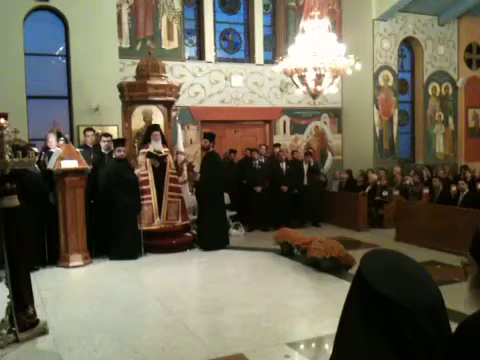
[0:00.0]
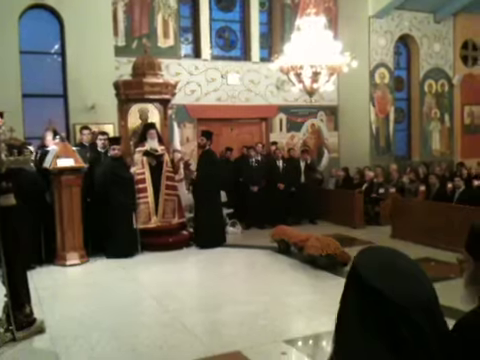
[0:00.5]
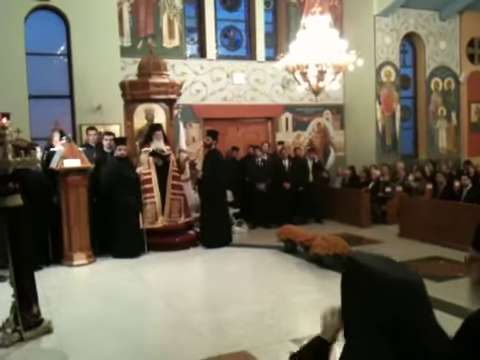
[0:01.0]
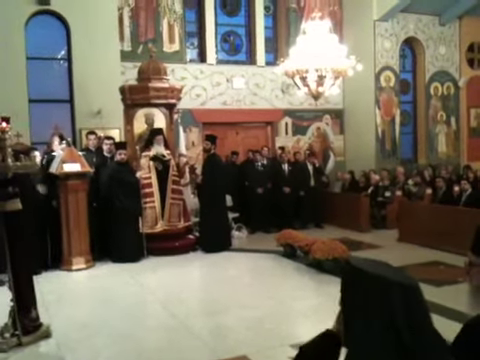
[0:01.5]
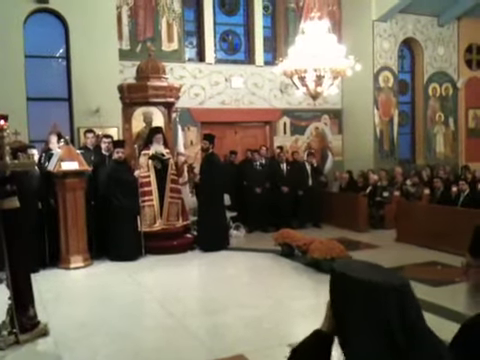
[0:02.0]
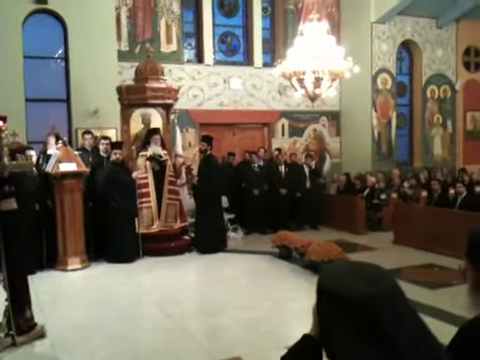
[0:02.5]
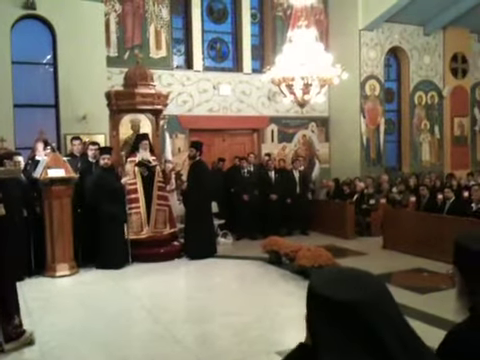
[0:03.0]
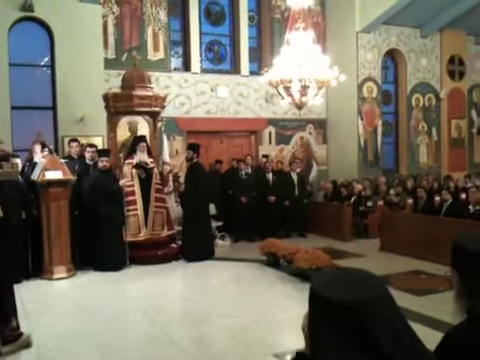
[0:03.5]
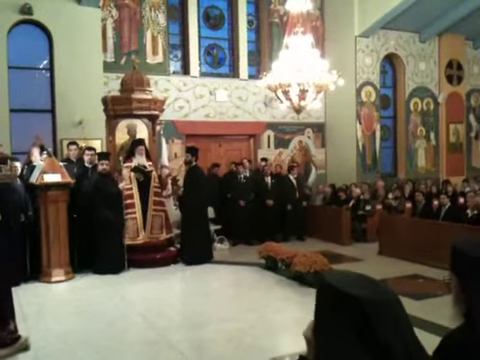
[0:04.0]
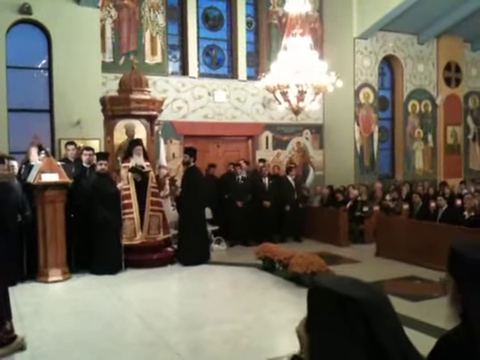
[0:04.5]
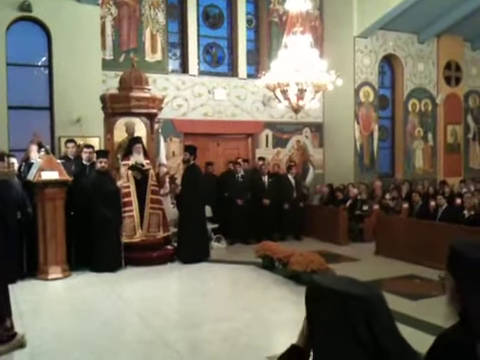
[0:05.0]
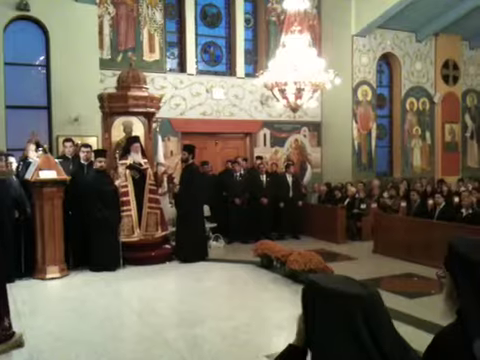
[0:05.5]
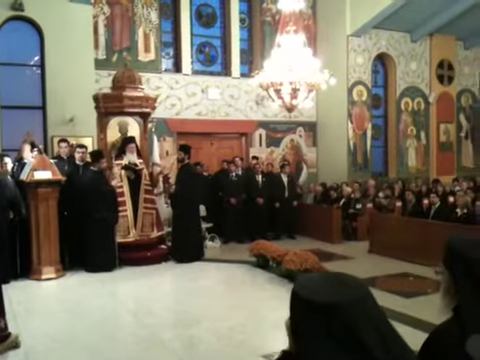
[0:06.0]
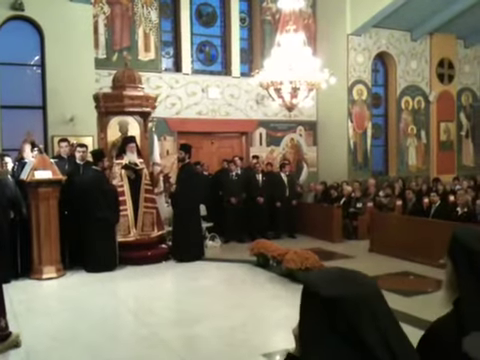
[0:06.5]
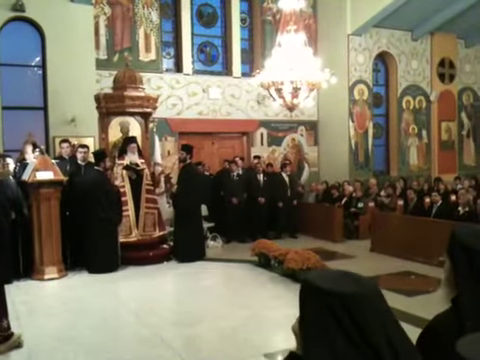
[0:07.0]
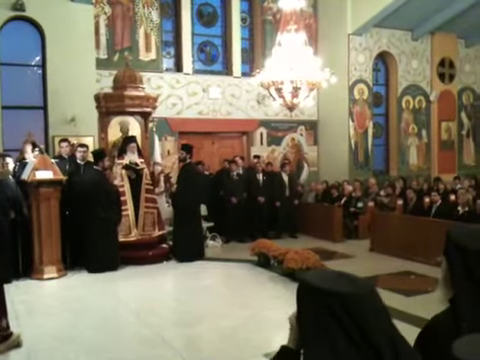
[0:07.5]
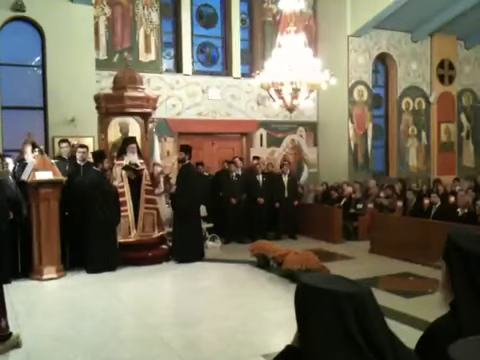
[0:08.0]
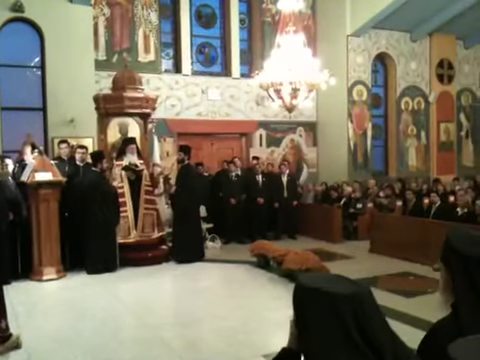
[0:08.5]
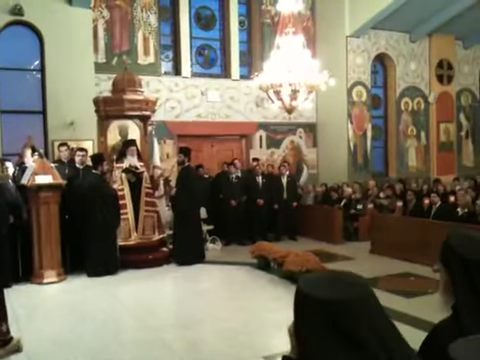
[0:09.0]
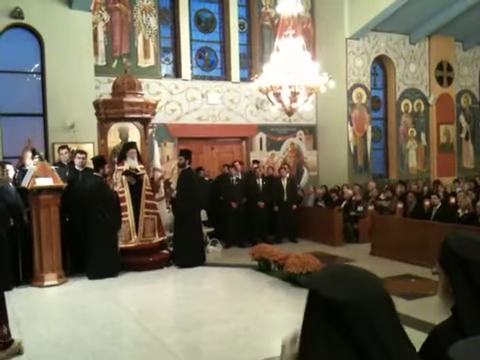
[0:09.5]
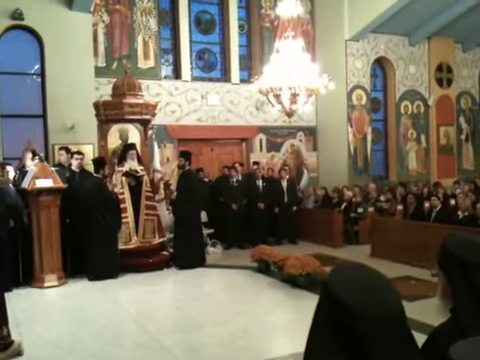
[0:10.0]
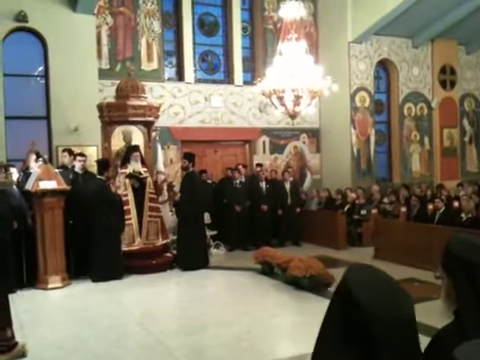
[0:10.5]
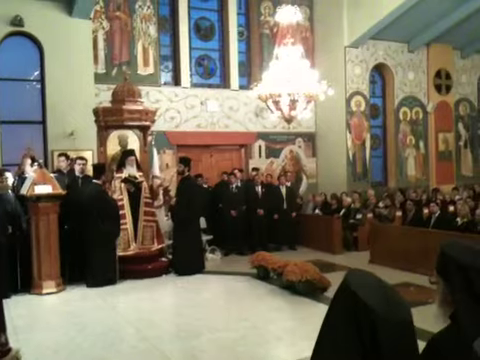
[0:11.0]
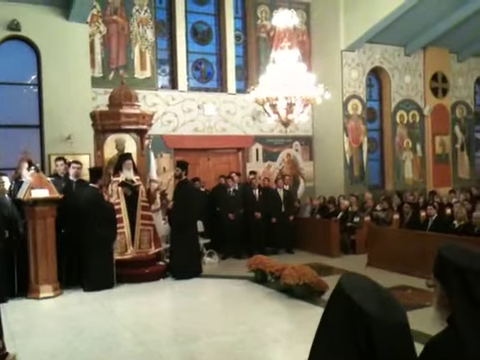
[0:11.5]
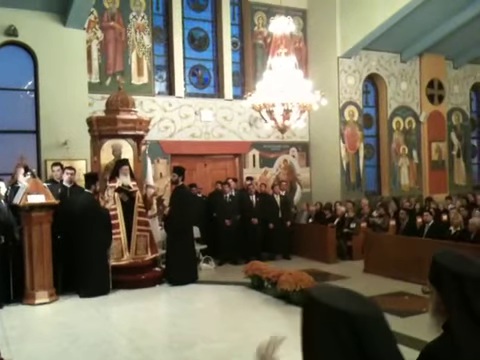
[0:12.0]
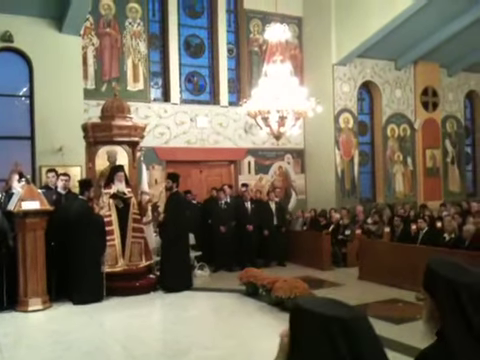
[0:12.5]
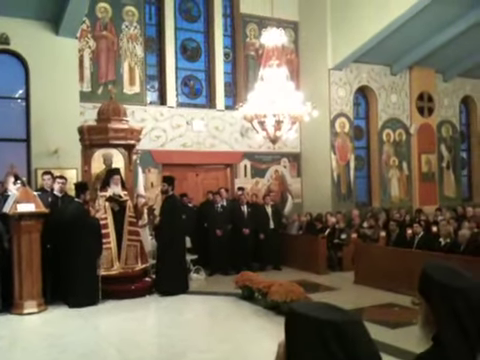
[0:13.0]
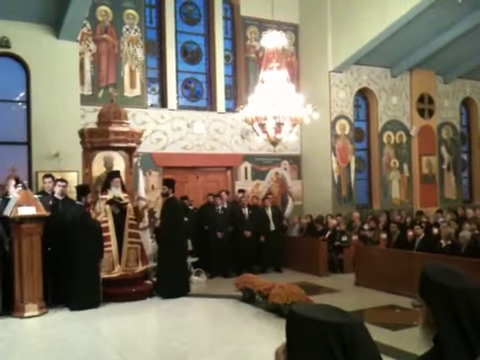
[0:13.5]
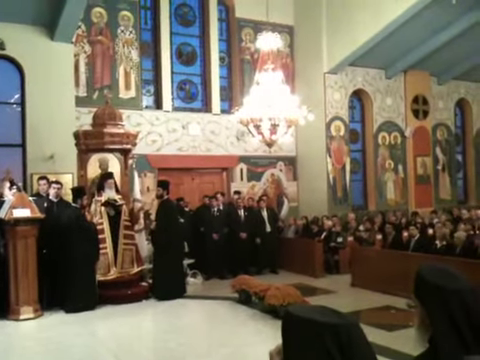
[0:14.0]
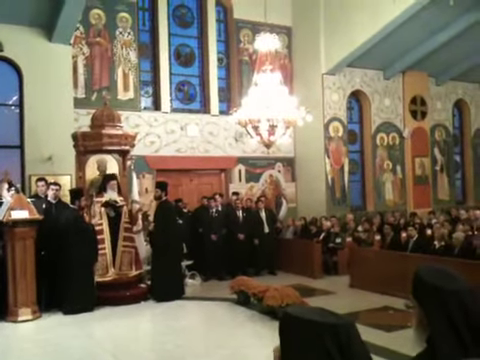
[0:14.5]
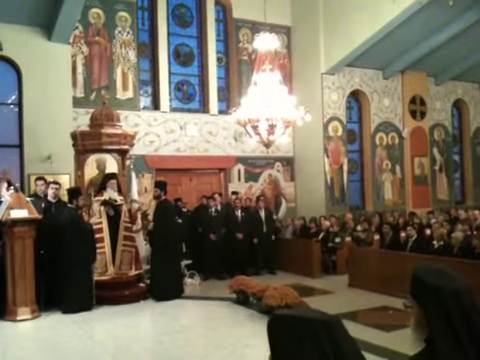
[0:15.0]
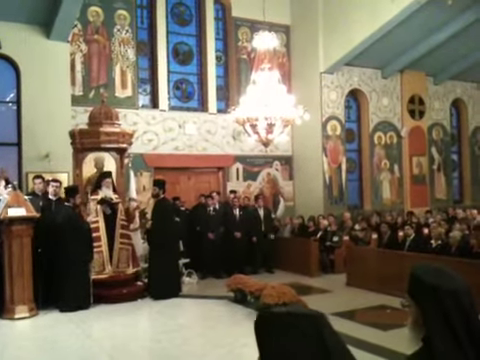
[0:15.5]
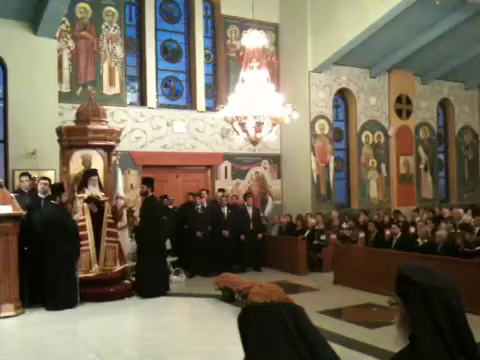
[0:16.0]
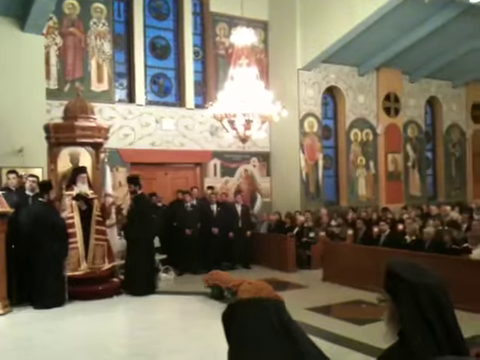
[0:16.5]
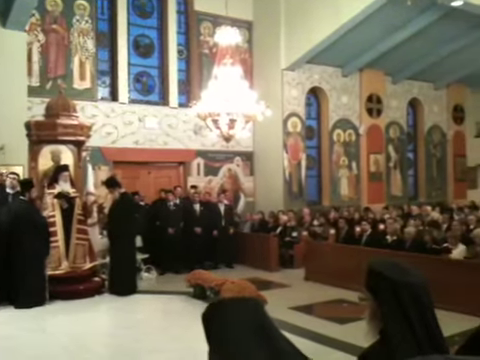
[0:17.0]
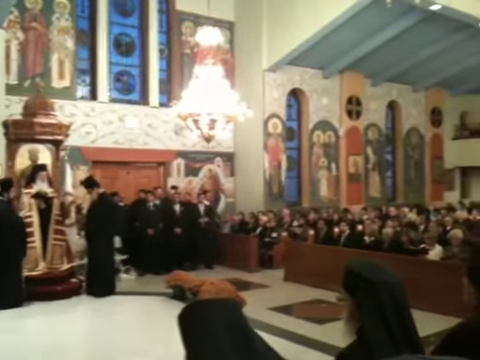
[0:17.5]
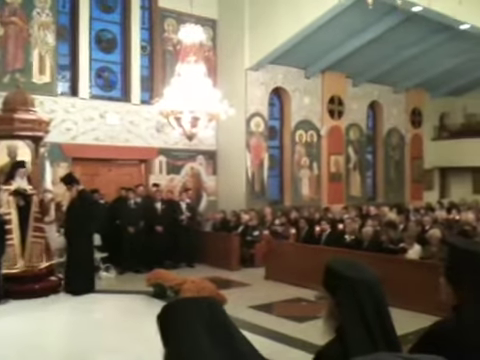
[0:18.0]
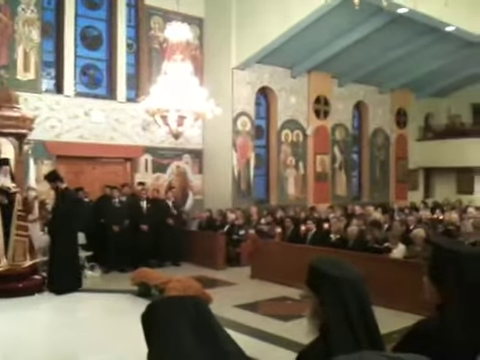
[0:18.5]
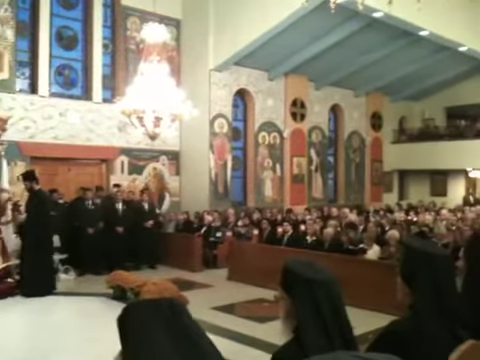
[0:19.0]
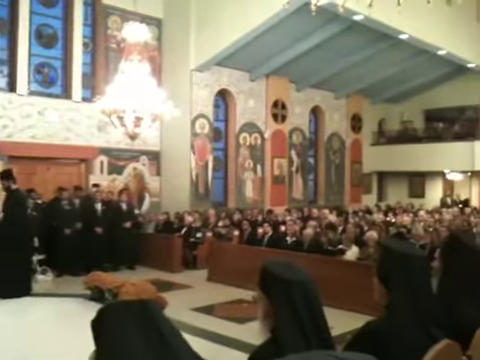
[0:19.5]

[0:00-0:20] Inside a historic house of worship, a person stands at the front, in front of an array of worshippers seated in wooden pews who are observing. A religious ceremony of some kind appears to be taking place. A man standing in the key location appears to be the minister, rabbi or priest of the group, and based on the robes, ceremonial costumes and hats, it looks like some type of Orthodox-type ceremony. This primary figure officiating the ceremony holds a book of worship of some type and appears to be reading from it. A couple of black-robed younger men are gathered around him, one to the left and one to the right. Some others stand a bit behind the ones to the left, and a group of men who are not wearing religious robes but are dressed in dark suits stands in front of a doorway.